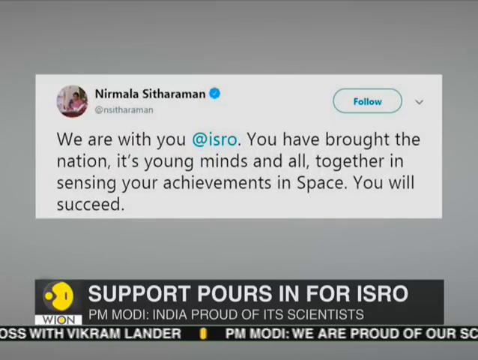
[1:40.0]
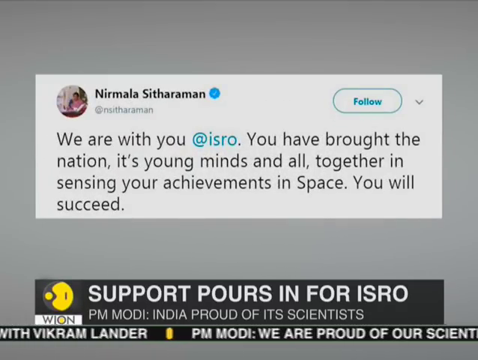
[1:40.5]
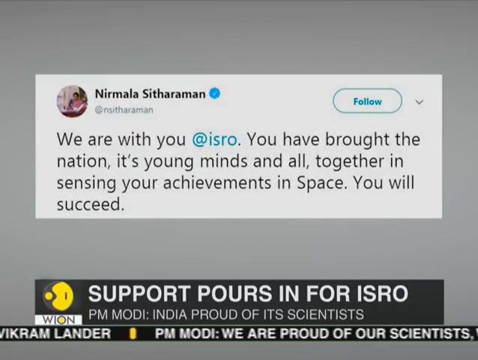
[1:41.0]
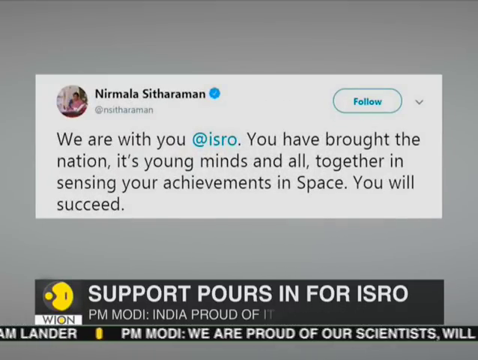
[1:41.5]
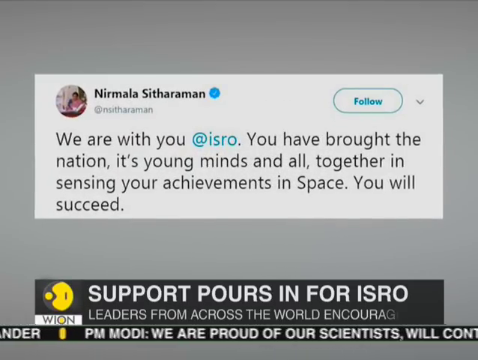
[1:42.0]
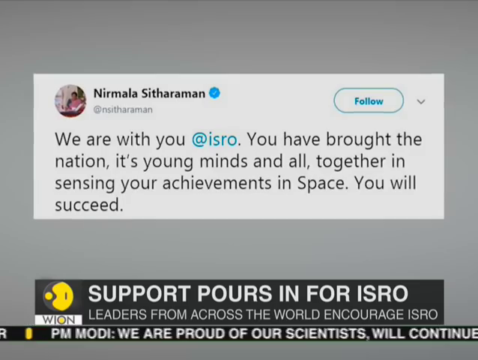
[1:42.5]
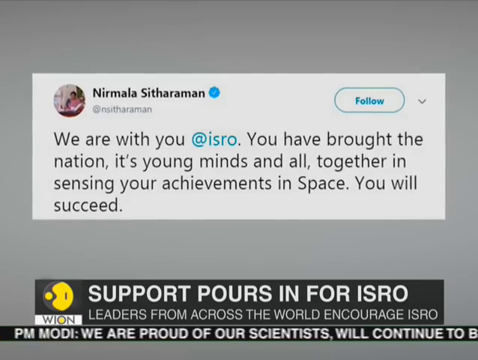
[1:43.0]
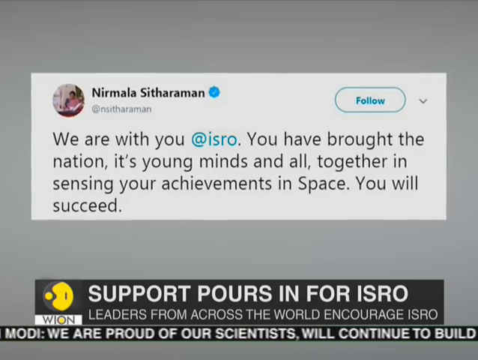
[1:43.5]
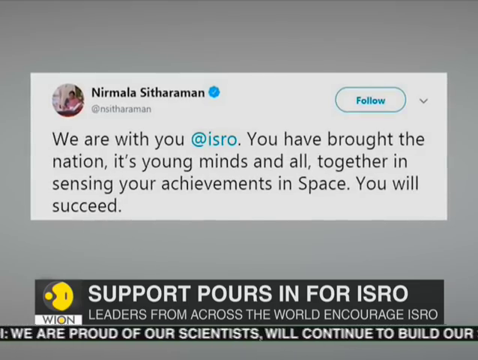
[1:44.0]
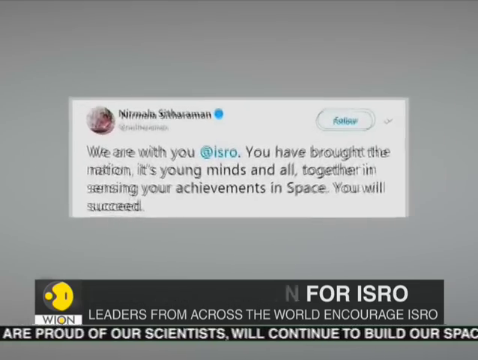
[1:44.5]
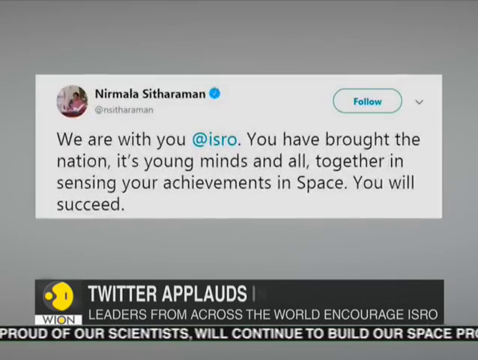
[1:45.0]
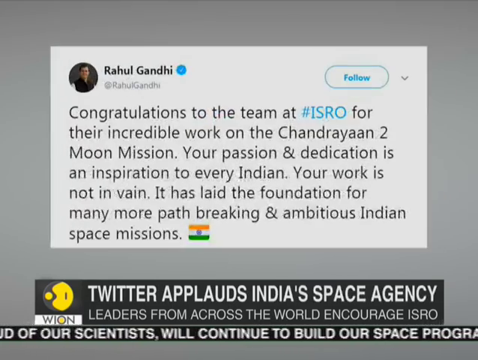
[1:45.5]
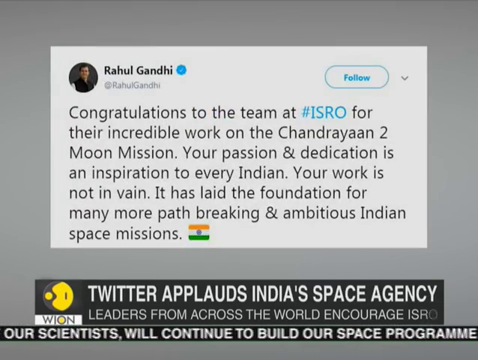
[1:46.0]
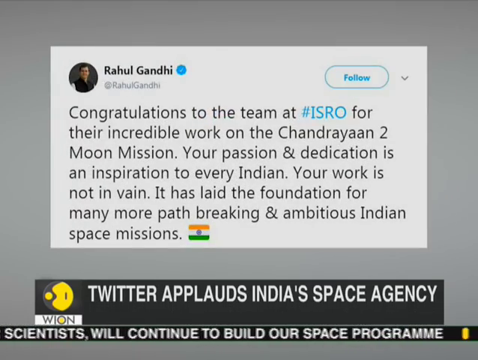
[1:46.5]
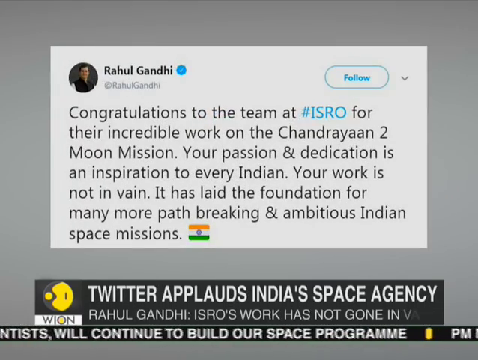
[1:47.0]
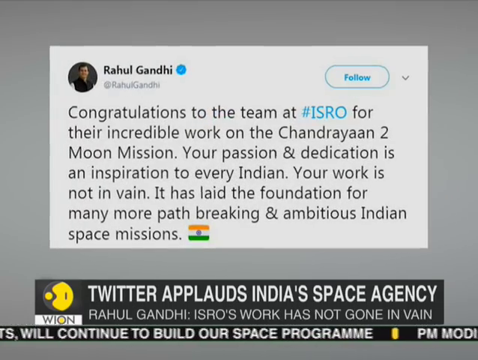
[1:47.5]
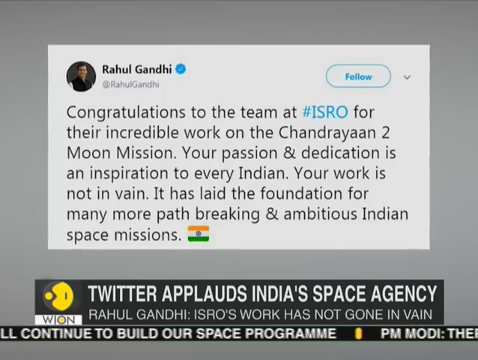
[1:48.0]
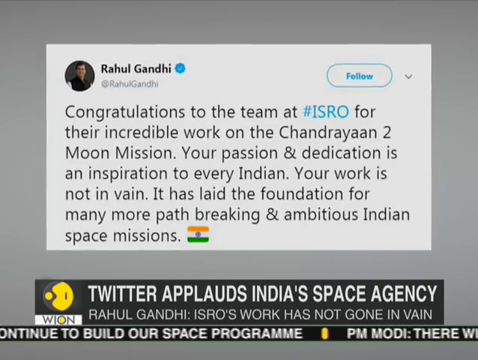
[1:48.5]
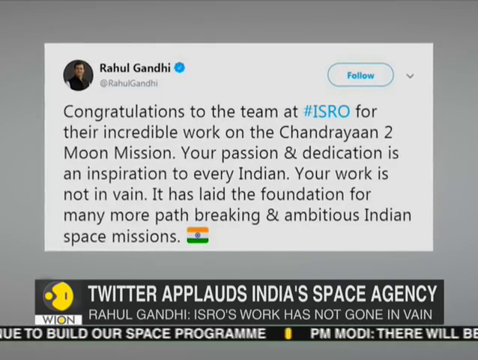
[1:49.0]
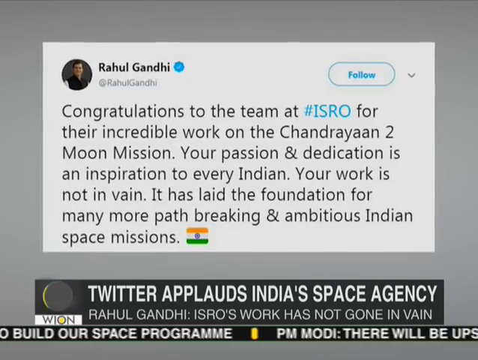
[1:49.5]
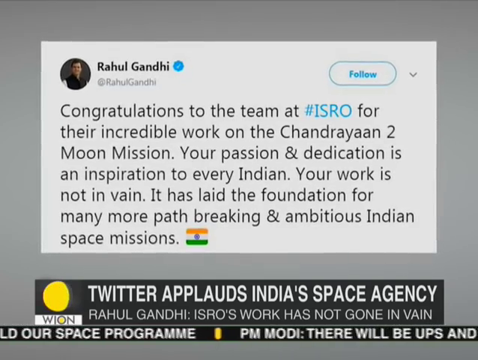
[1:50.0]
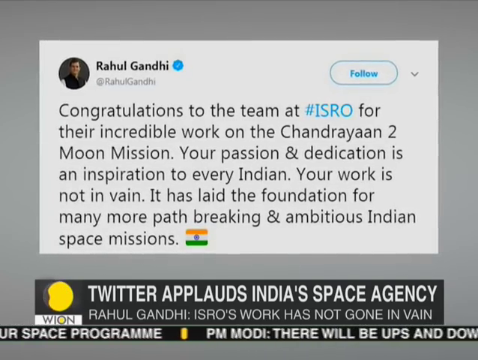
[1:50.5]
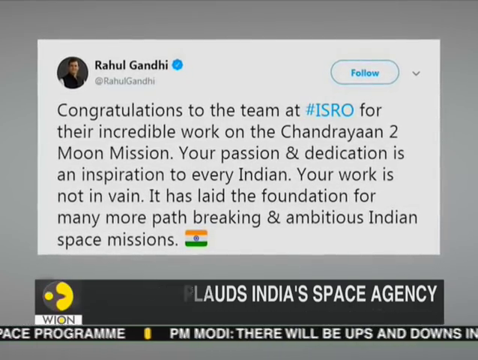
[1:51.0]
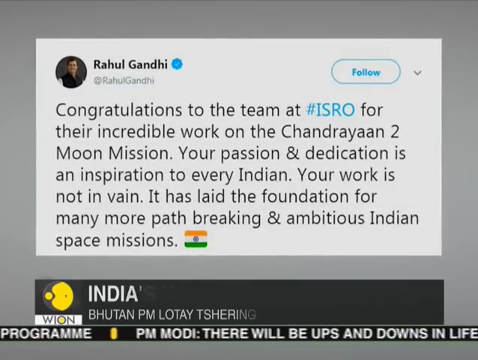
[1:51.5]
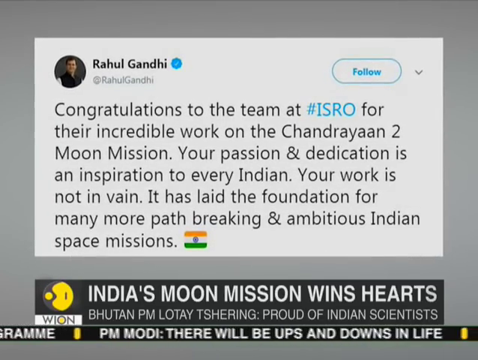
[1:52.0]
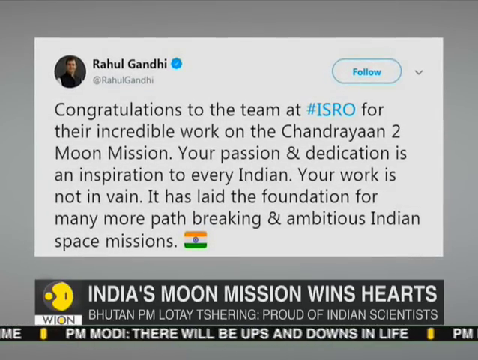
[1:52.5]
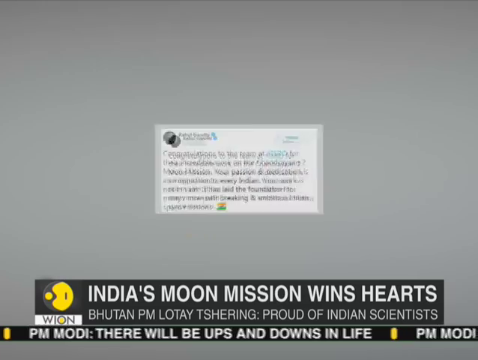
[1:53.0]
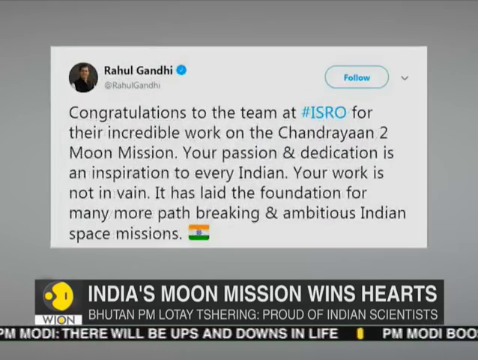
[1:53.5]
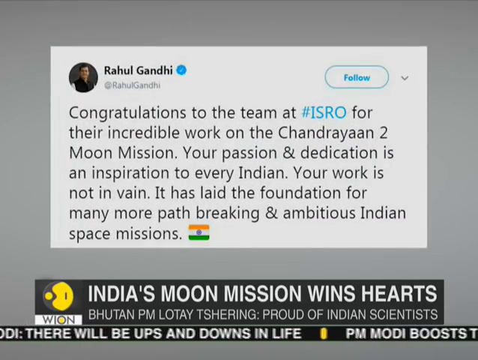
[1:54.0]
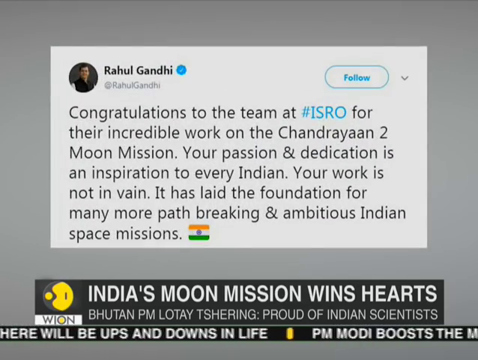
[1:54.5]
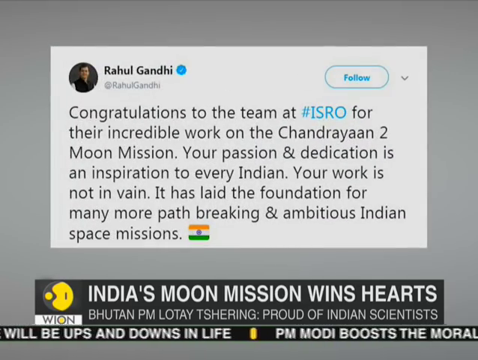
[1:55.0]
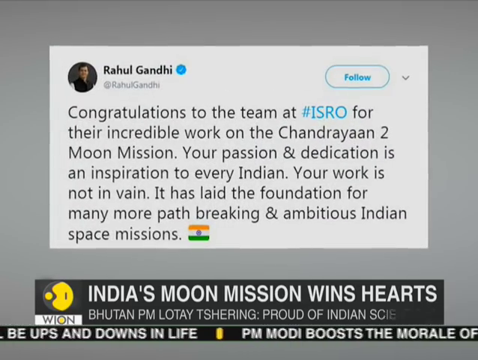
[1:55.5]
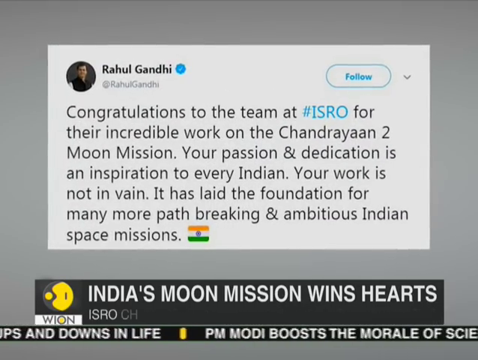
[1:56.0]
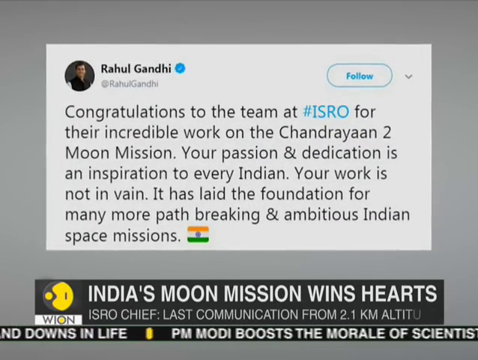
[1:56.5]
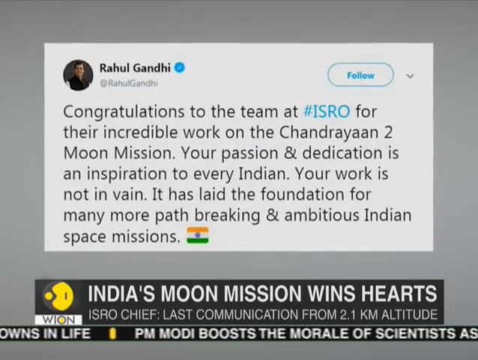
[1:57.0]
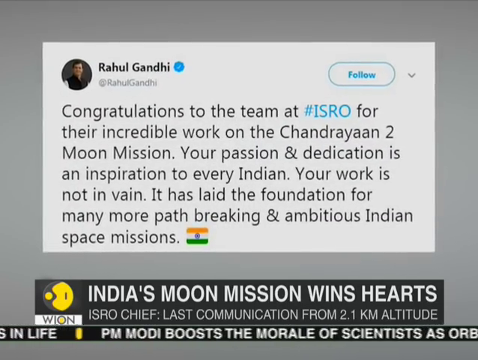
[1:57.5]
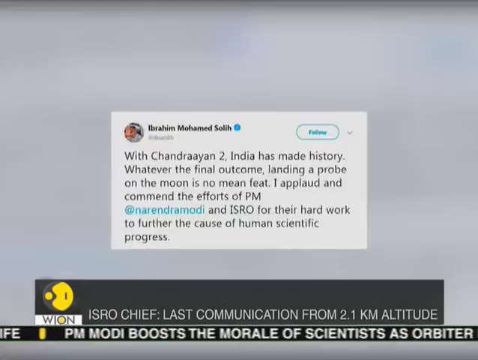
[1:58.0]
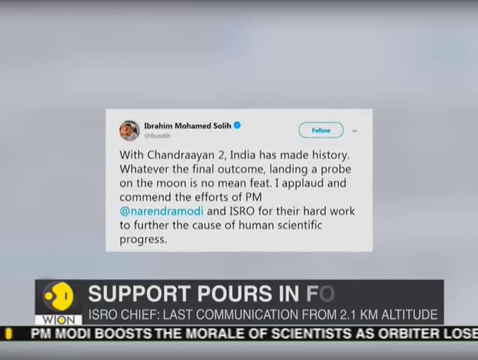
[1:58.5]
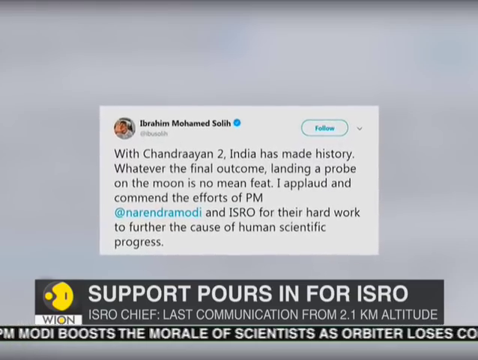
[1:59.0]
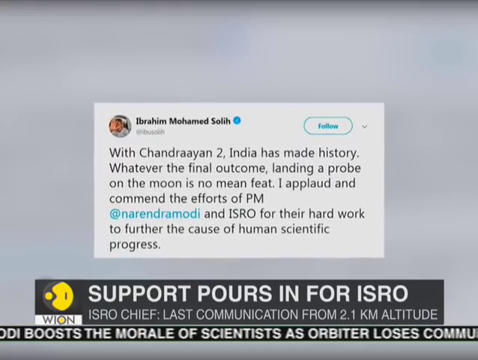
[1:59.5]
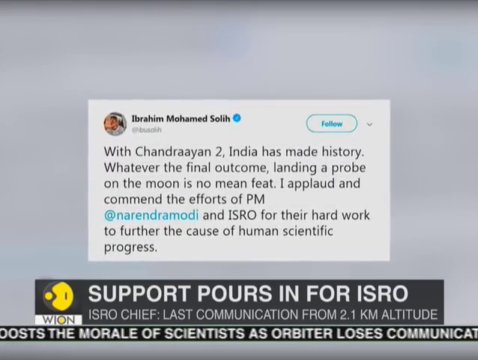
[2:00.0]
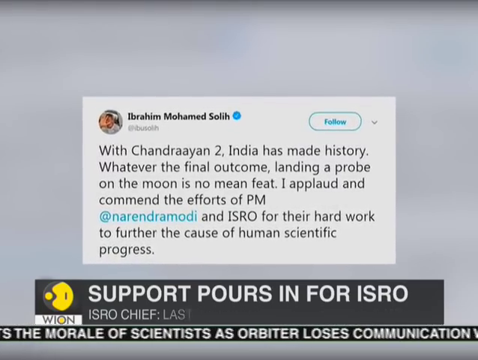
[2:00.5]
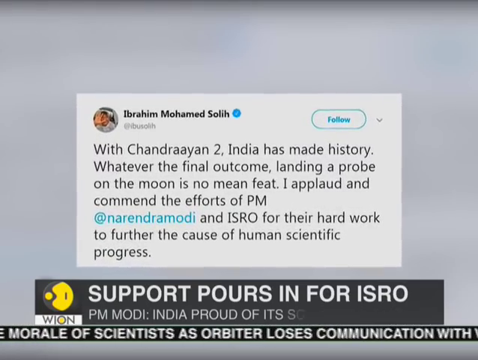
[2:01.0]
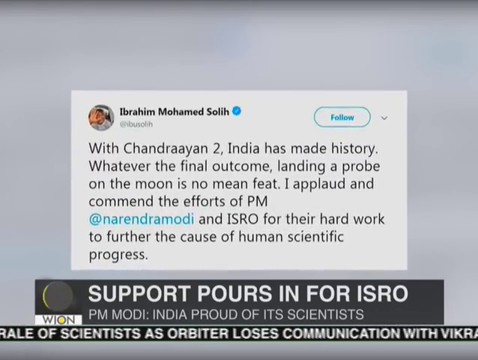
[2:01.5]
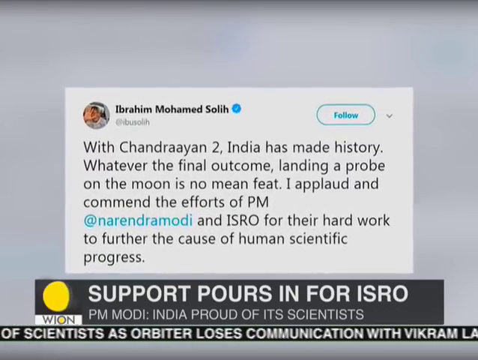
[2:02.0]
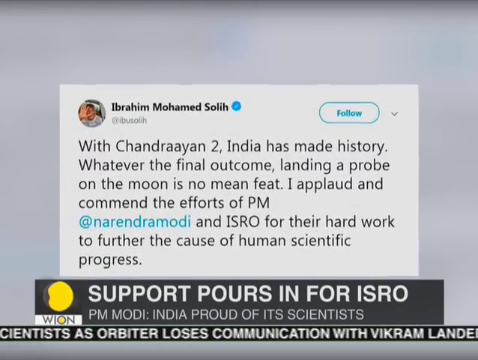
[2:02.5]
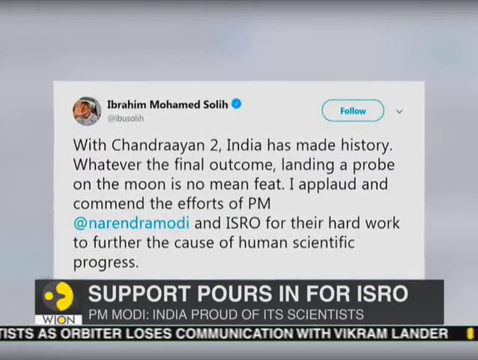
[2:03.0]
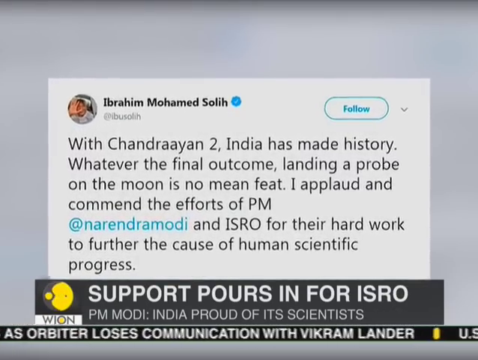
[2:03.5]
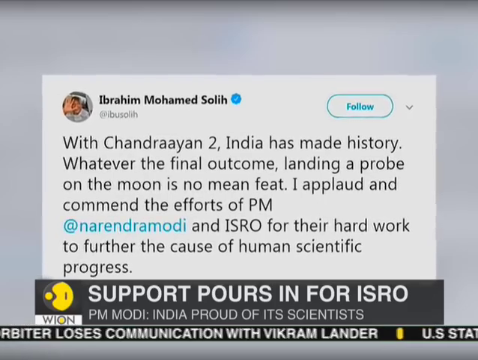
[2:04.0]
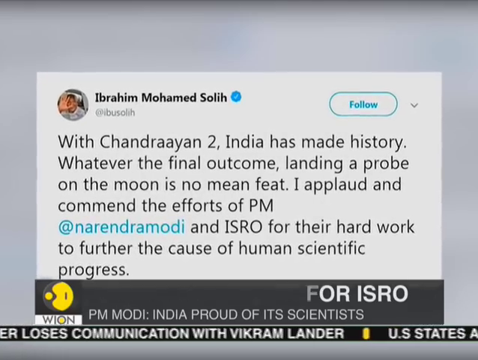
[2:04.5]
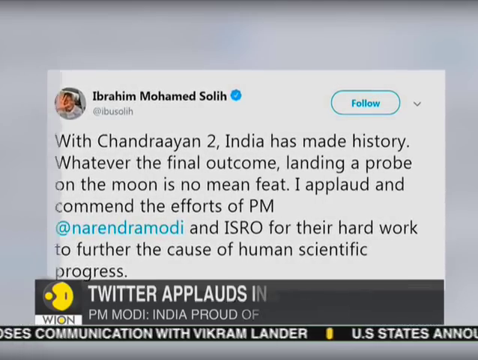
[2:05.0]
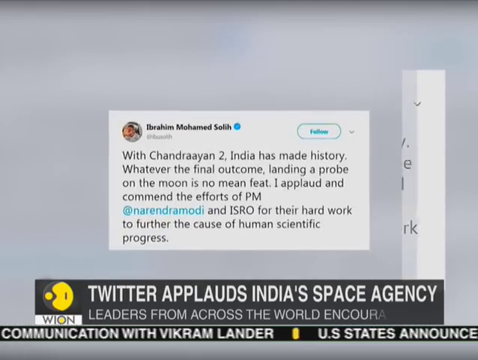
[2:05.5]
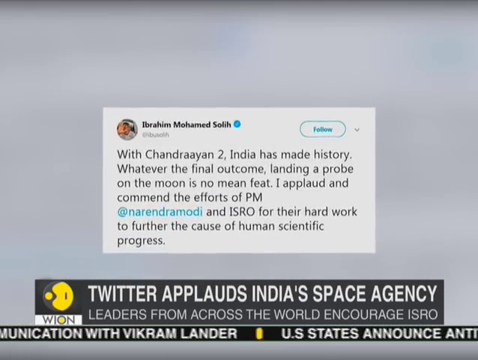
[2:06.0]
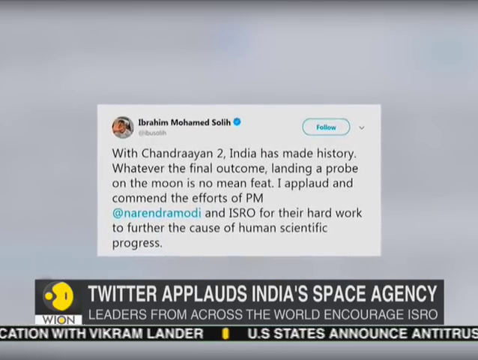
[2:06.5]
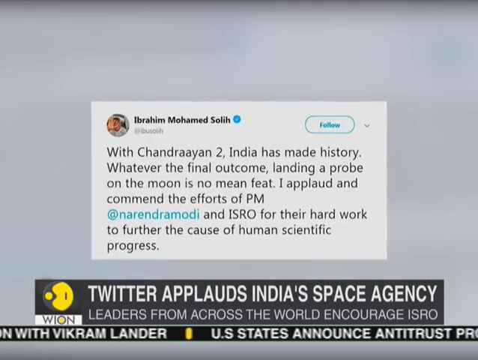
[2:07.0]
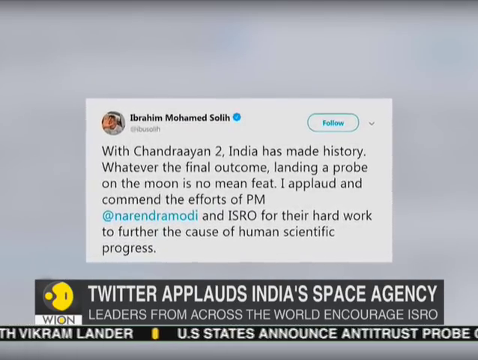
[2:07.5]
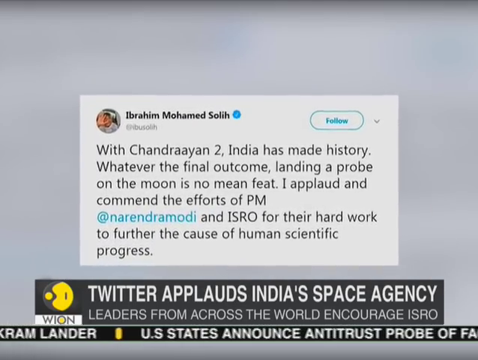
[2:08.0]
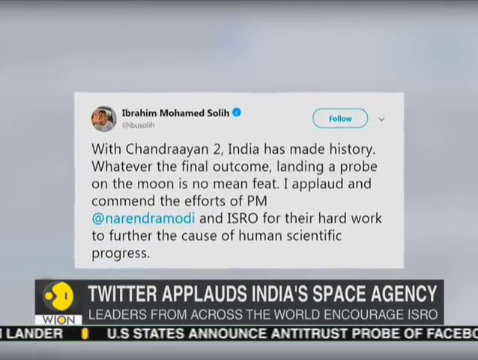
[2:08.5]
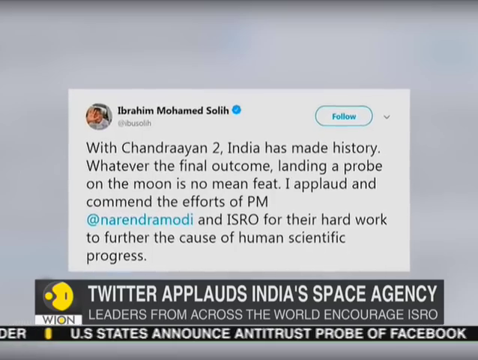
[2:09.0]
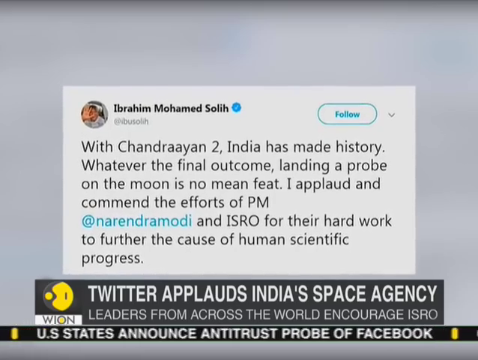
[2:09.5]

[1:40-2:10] The WION (World is One) News report on the Chandrayaan-2 moon probe shows tweets, including Nirmala Sitaratman's: "We are with you @isro. You have brought the nation, its young minds and all together in sensing your achievements in space. You will succeed." Text reads that leaders from across the world encourage ISRO. A tweet from Rahul Gandhi reads: "Congratulations to the team at #ISRO for their incredible work on the Chandrayaan-2 the moon mission. Your passion and dedication is an inspiration to every Indian. Your work is not in vain. It has laid the foundation for many more pathbreaking and ambitious Indian space missions." This tweet is shown twice. Next, a tweet from Ibrahim Mohamed Soli reads: "With Chandrayaan-2, India has made history."